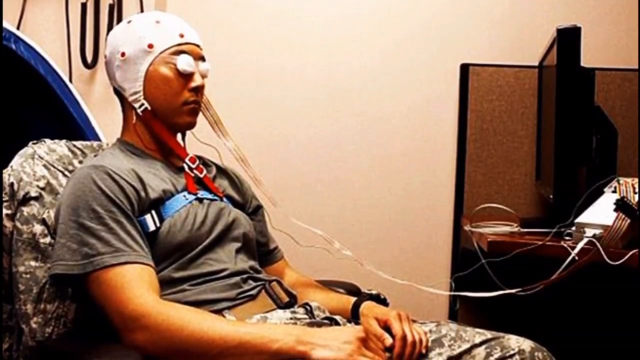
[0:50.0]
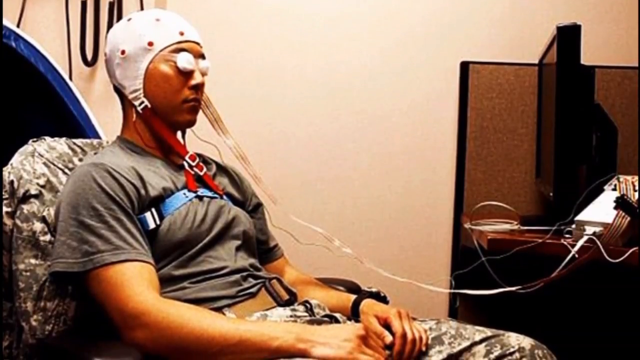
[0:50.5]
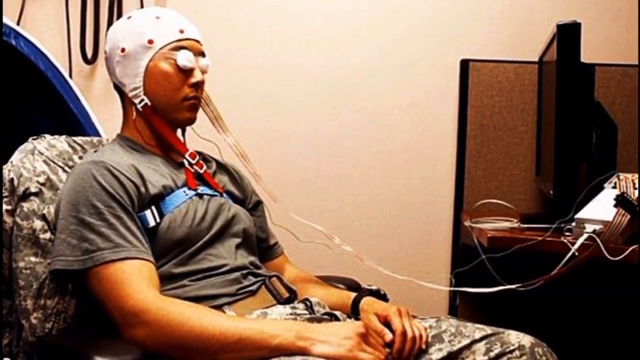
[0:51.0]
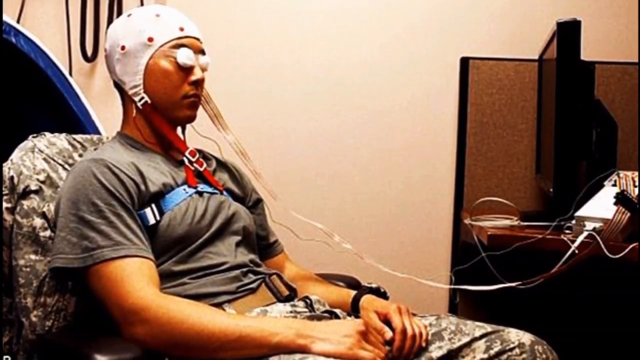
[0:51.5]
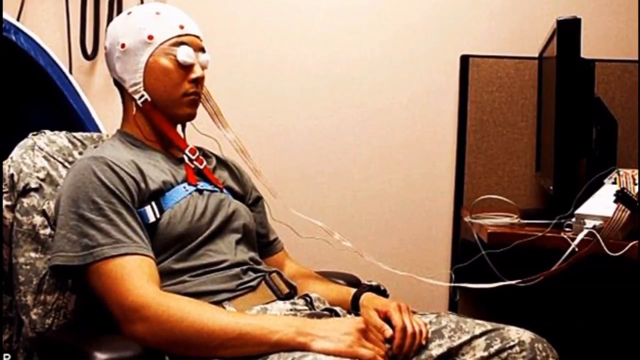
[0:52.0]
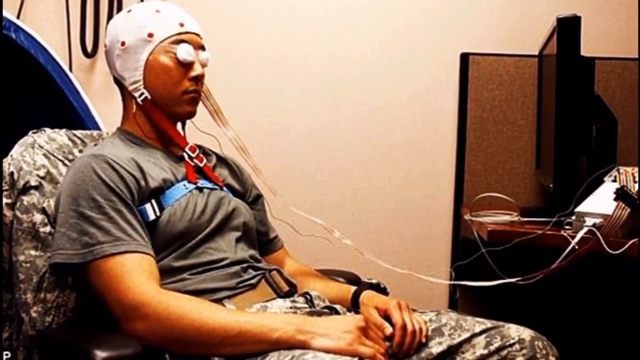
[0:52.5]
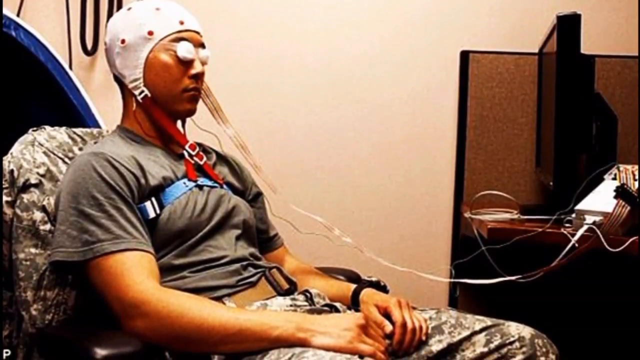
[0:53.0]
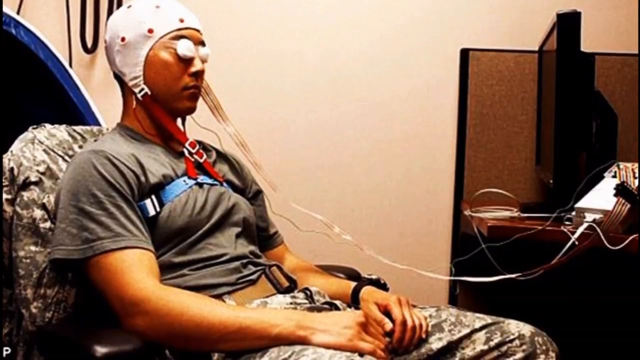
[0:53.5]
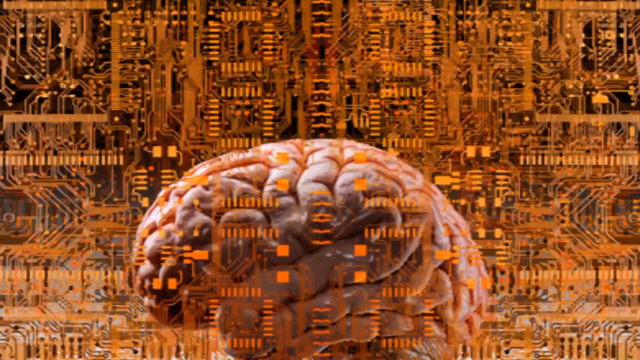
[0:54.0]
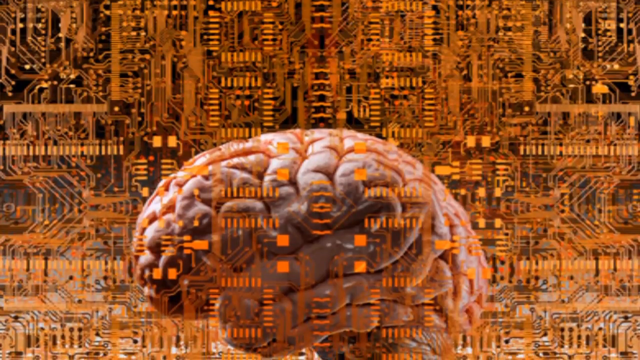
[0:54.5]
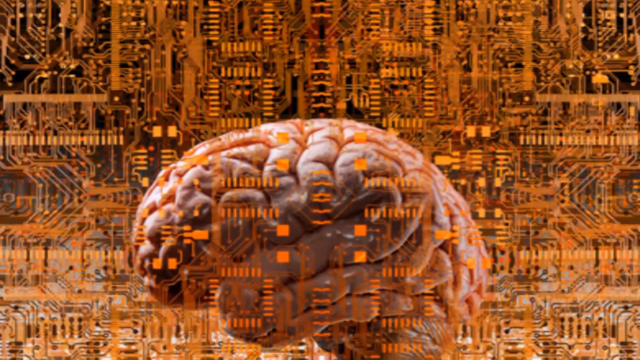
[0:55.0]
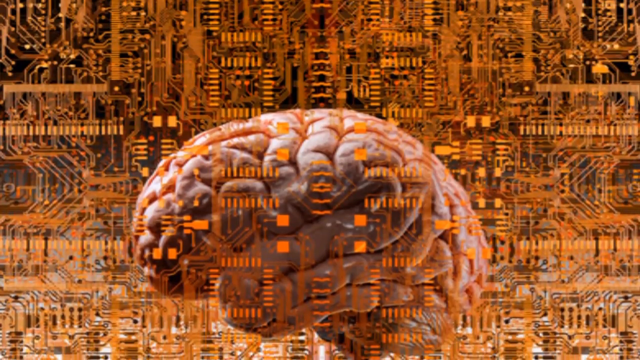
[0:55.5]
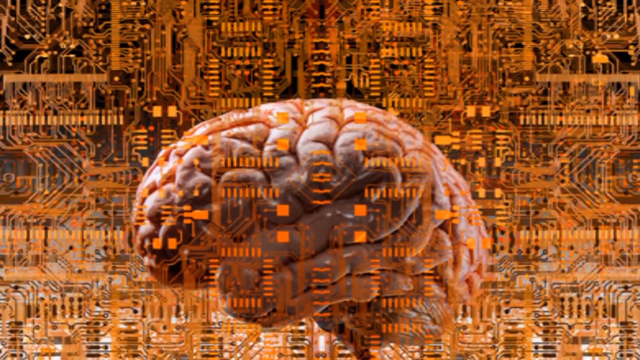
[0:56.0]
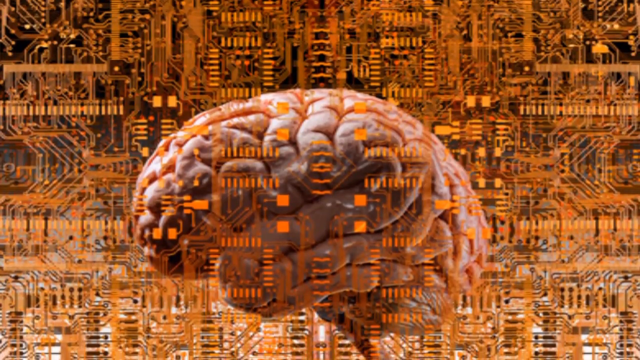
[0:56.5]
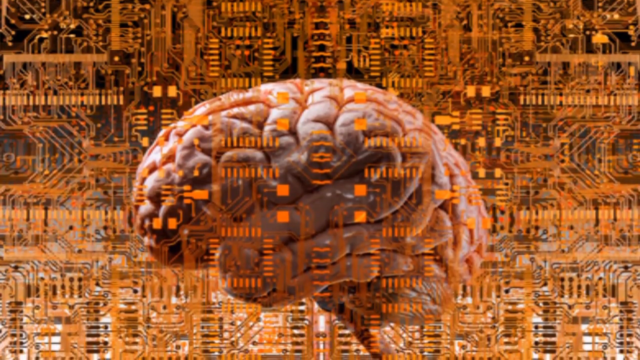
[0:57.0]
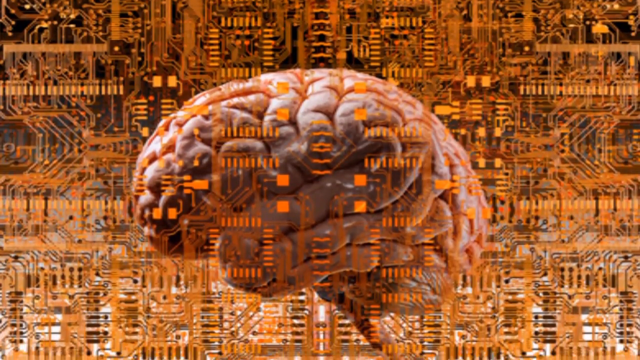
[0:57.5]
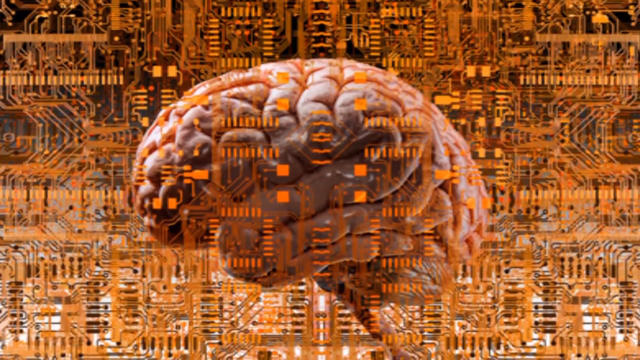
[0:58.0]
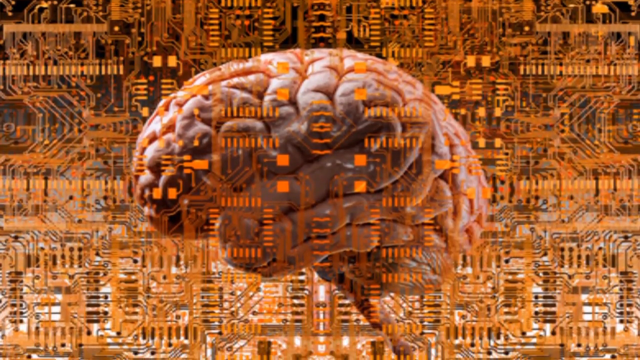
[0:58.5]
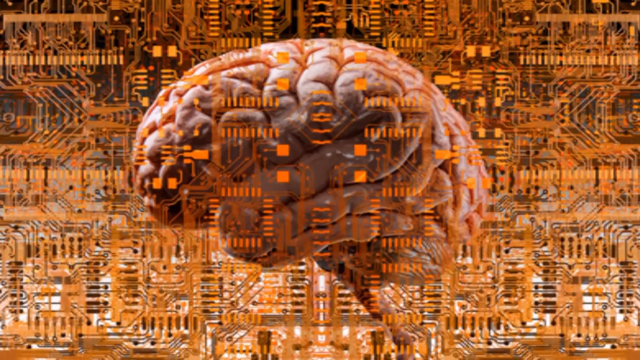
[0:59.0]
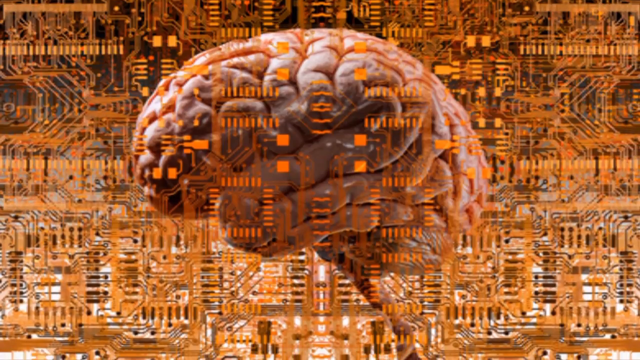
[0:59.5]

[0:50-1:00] The person lying down with the machine attached to their head remains on screen as the camera moves downward. The next image is a pink brain positioned sideways, set against a very futuristic-looking orange background with lots of lines moving in different directions, mostly in square form; the background seems to be made up of layers and layers of orange lines.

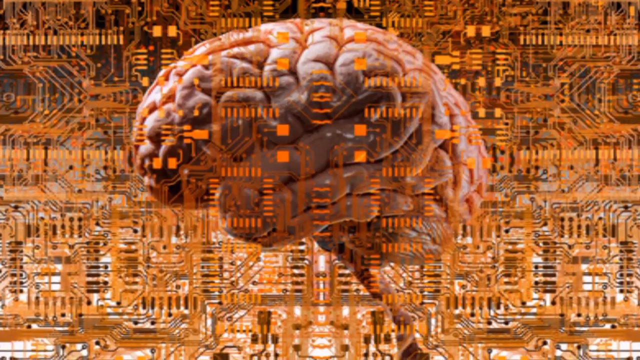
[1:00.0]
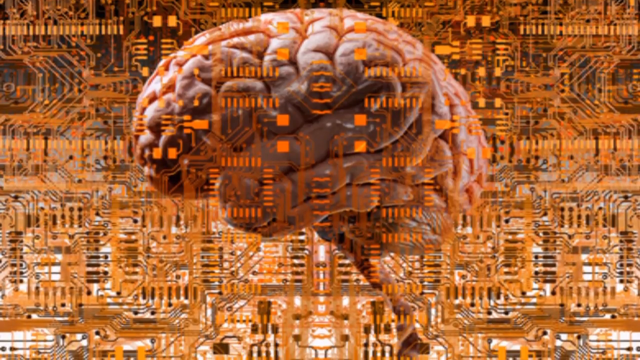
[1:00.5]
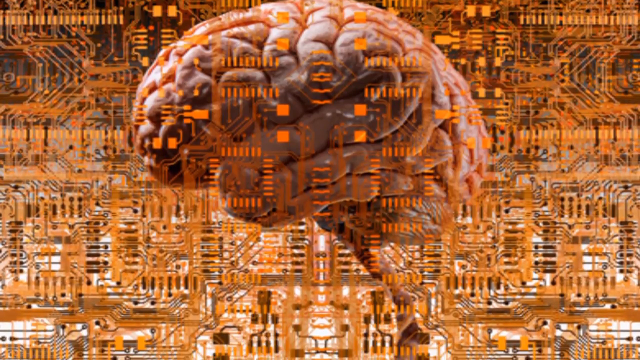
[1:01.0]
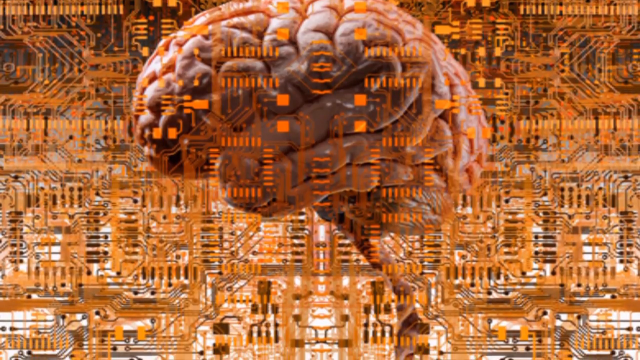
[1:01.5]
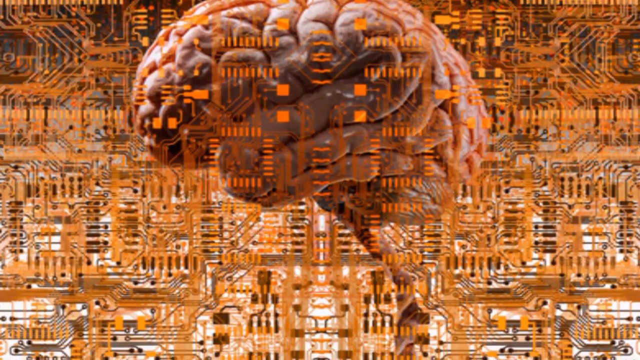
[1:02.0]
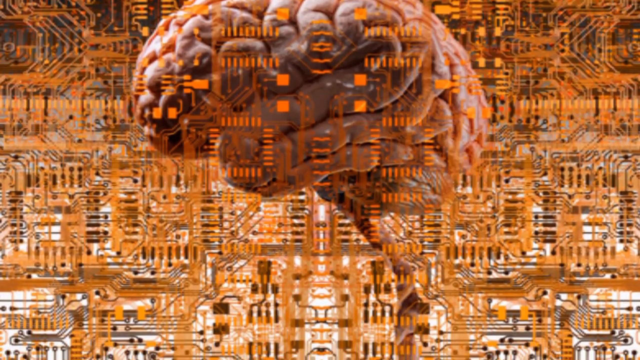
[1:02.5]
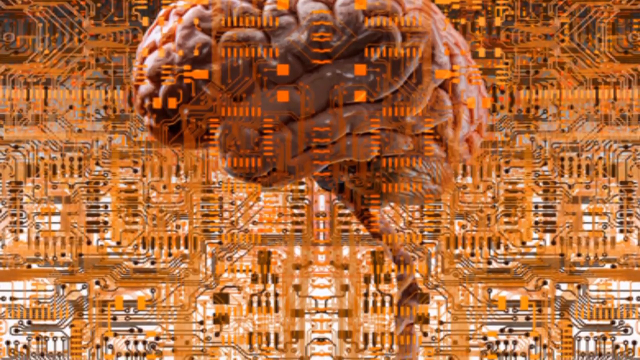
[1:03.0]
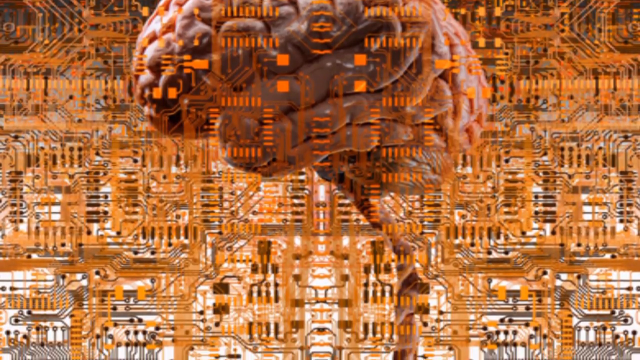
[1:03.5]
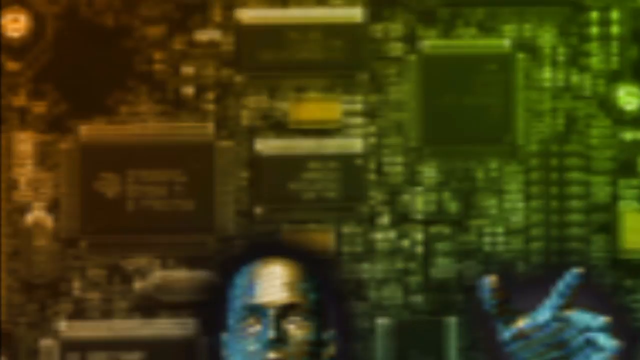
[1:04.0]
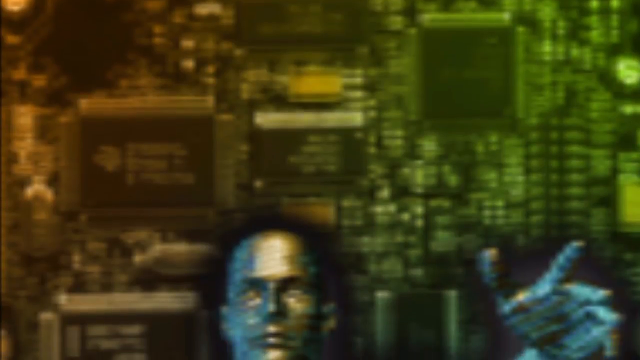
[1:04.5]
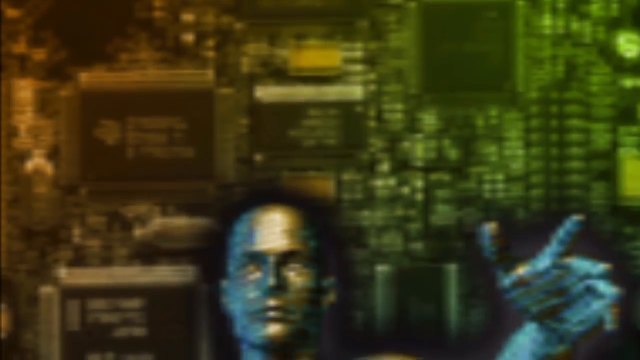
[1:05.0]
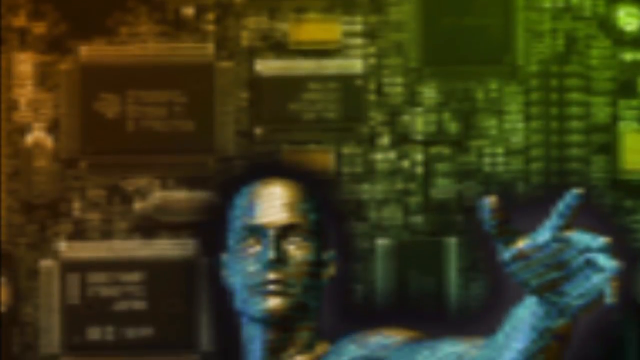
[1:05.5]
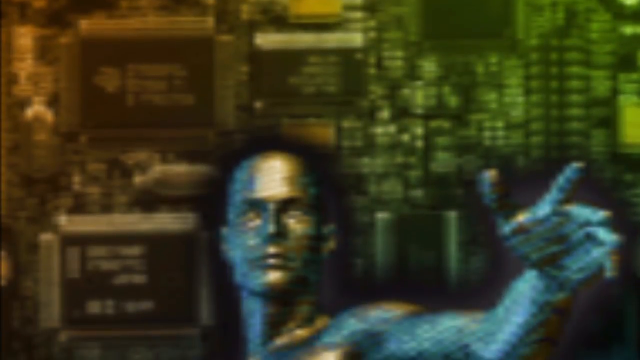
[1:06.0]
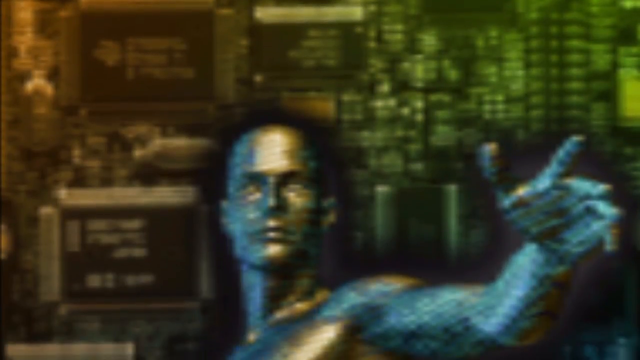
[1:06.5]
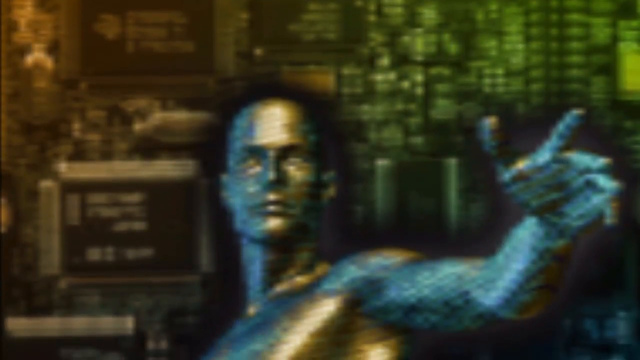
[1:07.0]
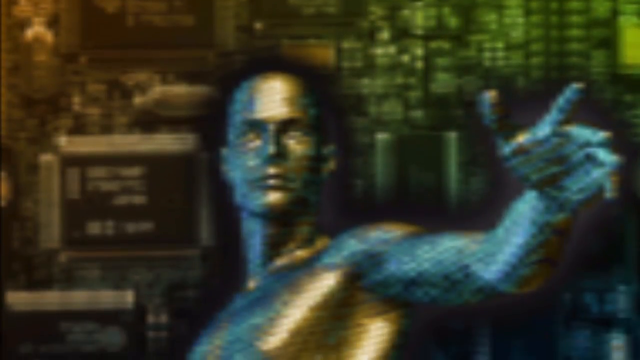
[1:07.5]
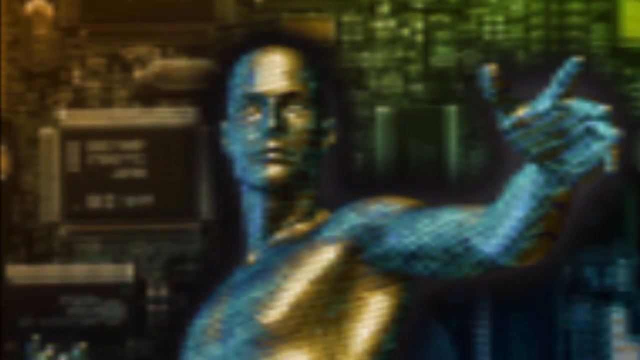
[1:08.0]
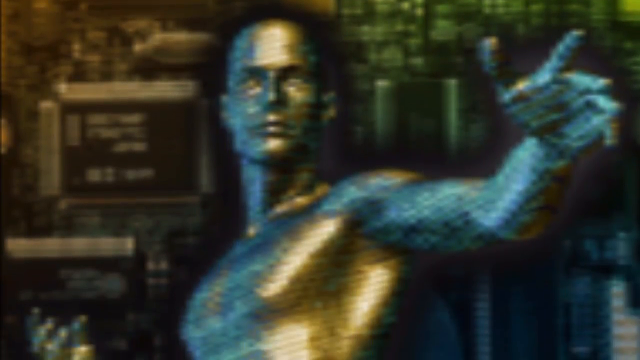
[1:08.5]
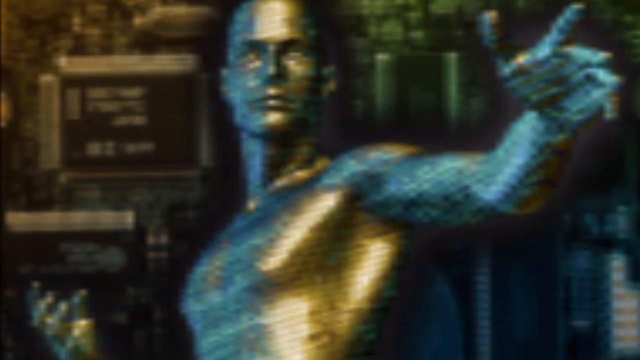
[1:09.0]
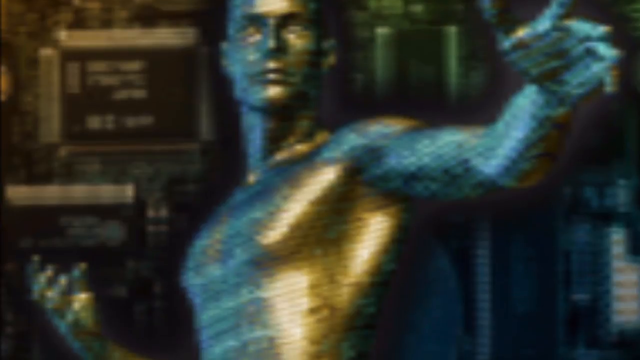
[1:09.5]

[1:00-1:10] The pink brain, positioned sideways against the orange futuristic linear background, remains on screen as the camera continues to move downward and reveals the brain stem. The next image is a blurry view of what looks like a statue of a middle-aged man with his left hand out in front of him; his arm and chest are blue, while the rest of his body is a metallic gold color. The camera continues moving downward and reaches his waistline.